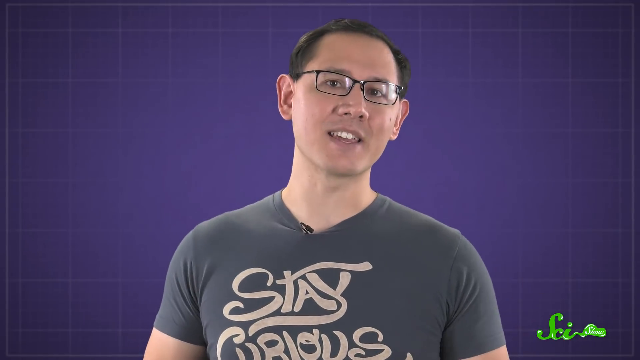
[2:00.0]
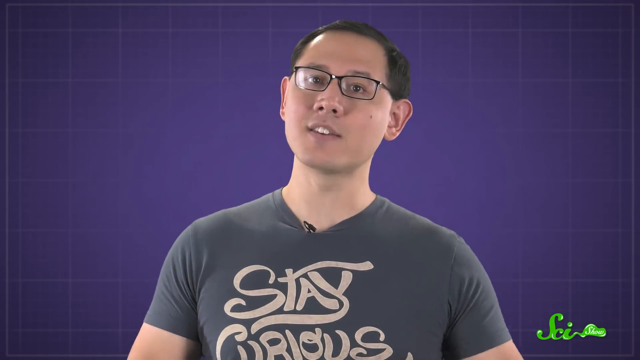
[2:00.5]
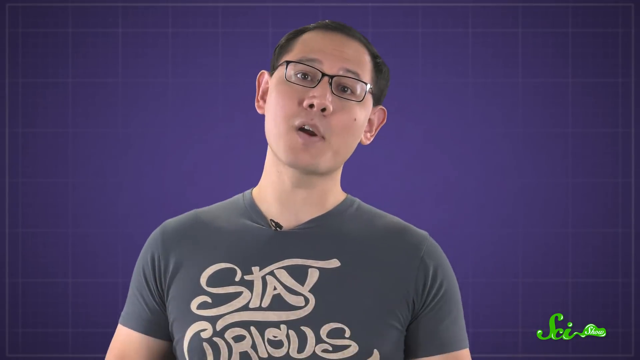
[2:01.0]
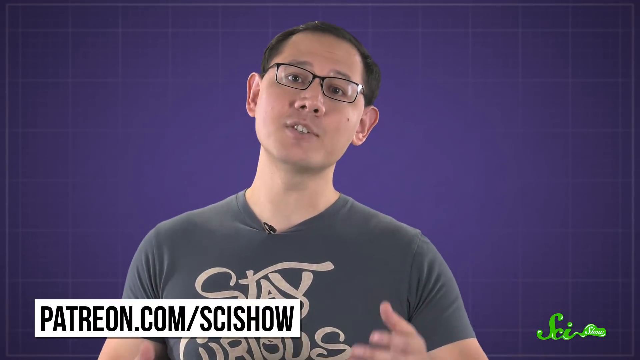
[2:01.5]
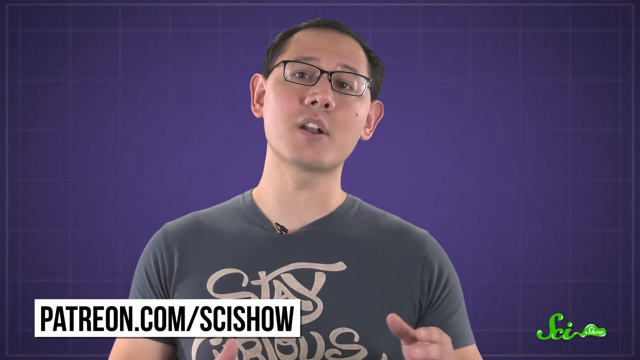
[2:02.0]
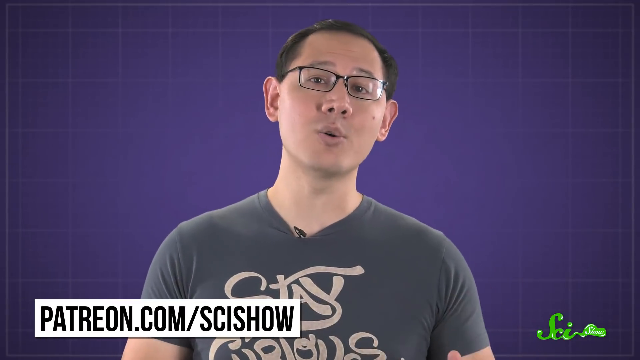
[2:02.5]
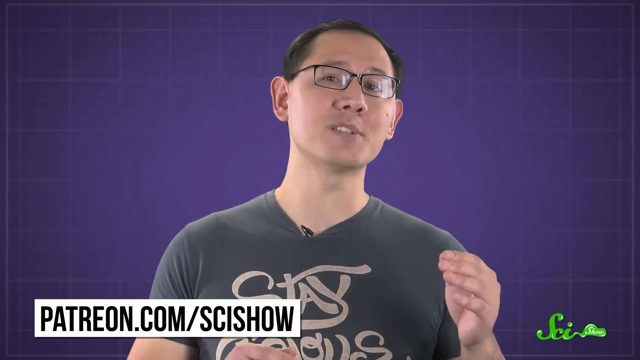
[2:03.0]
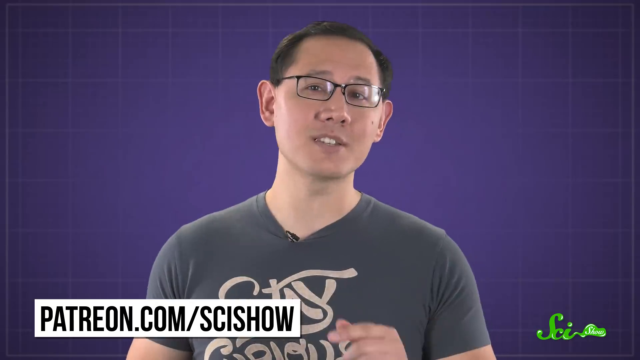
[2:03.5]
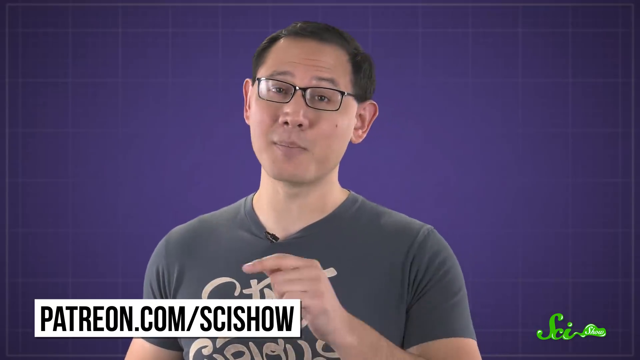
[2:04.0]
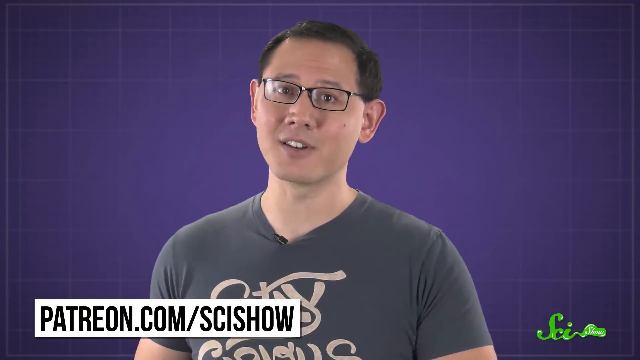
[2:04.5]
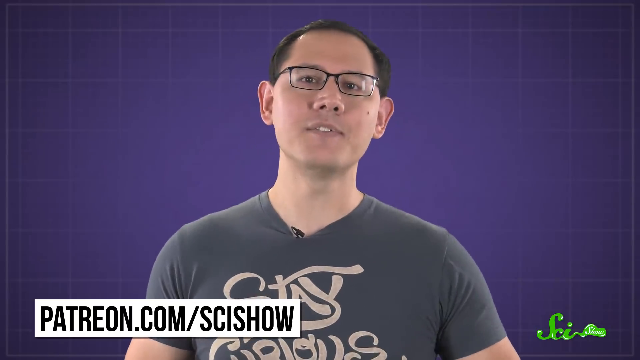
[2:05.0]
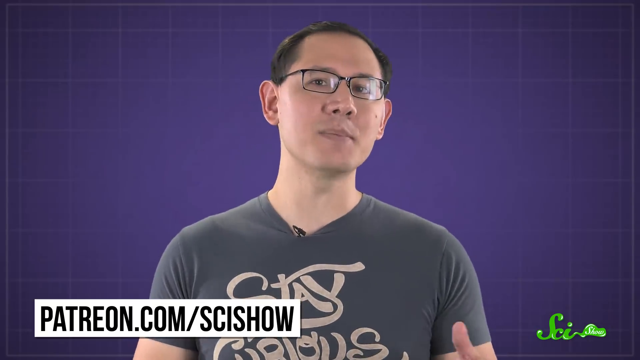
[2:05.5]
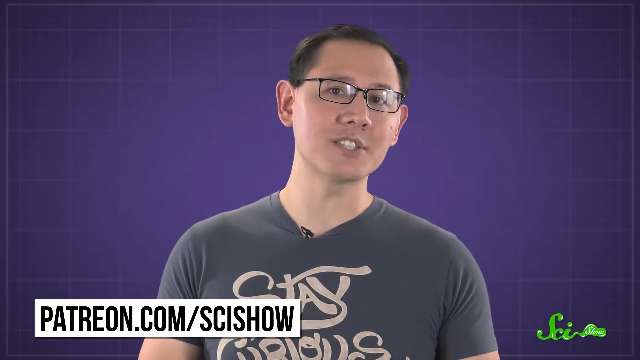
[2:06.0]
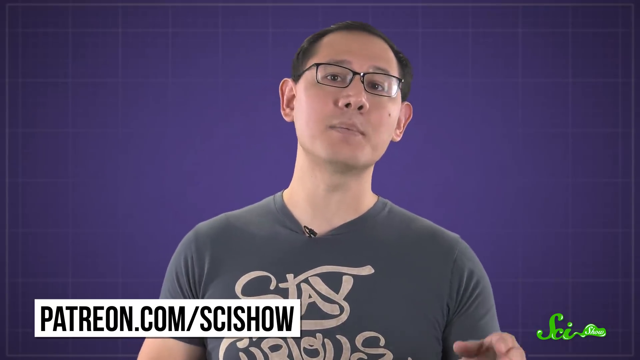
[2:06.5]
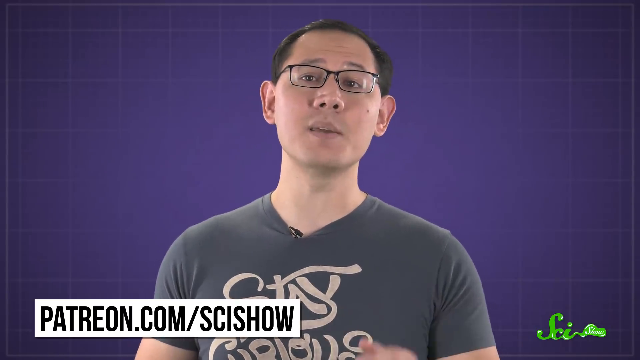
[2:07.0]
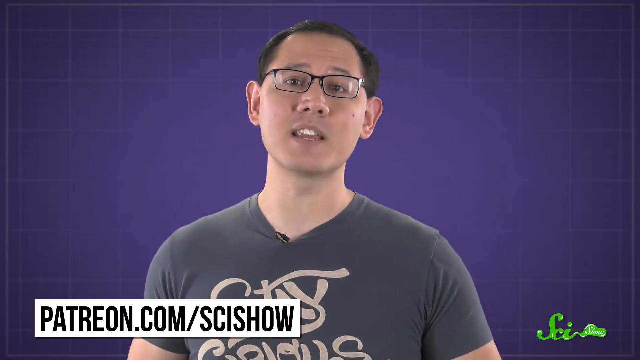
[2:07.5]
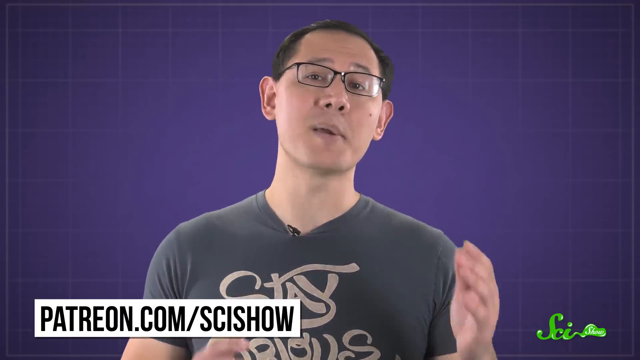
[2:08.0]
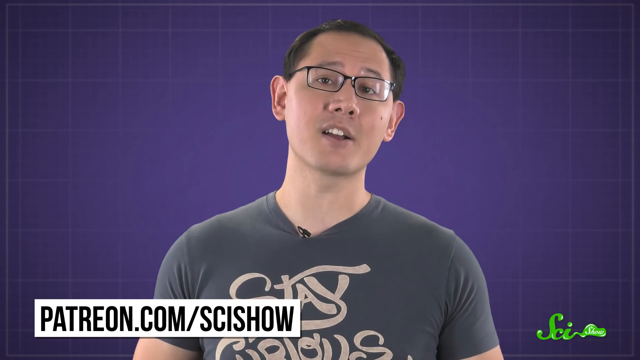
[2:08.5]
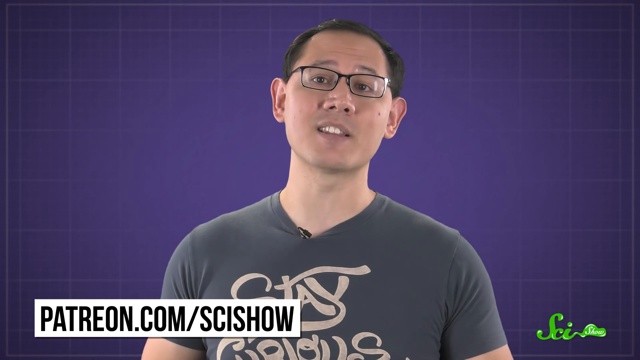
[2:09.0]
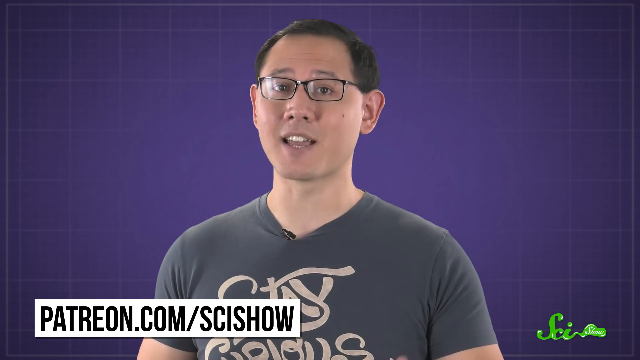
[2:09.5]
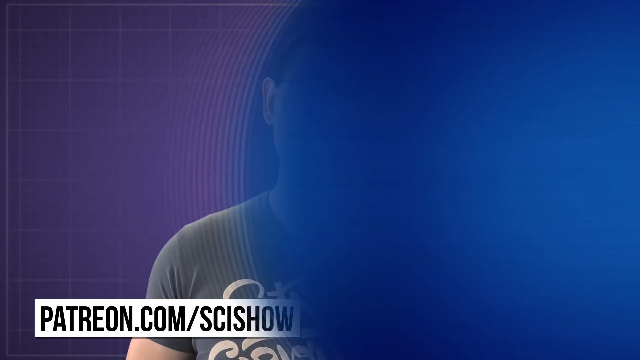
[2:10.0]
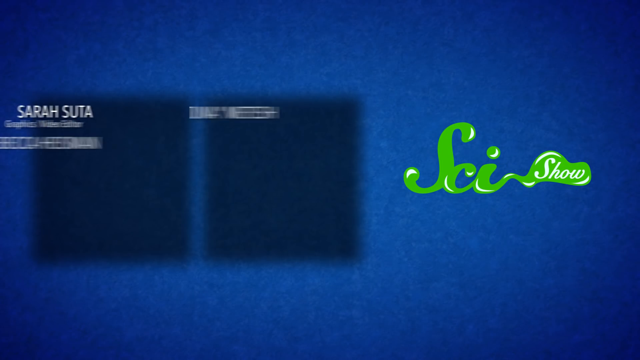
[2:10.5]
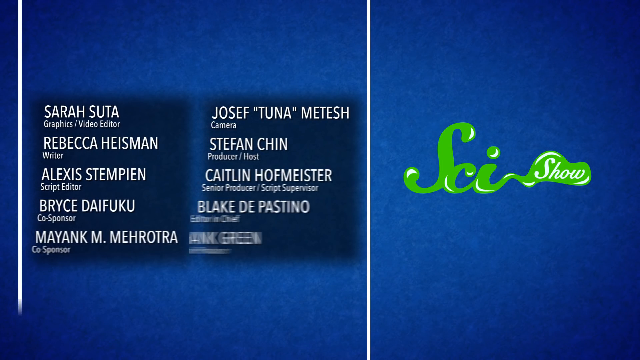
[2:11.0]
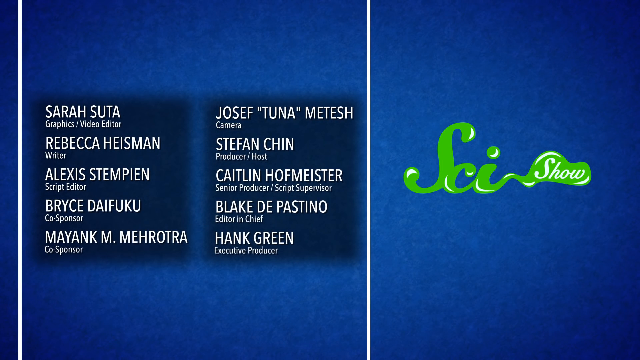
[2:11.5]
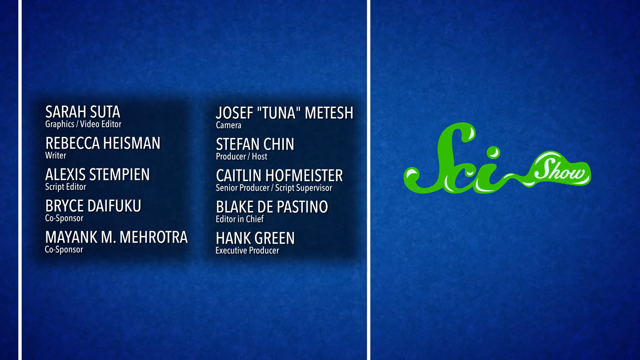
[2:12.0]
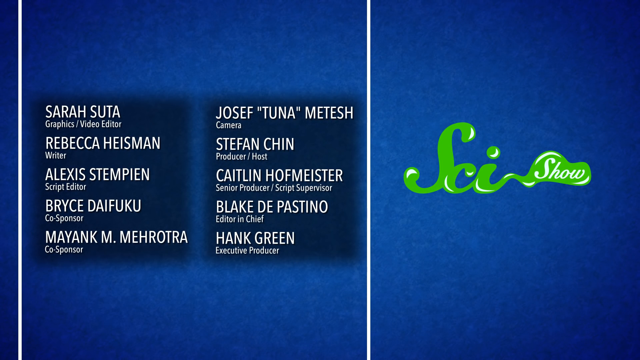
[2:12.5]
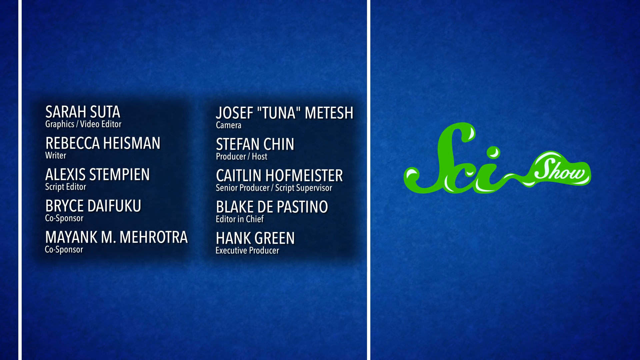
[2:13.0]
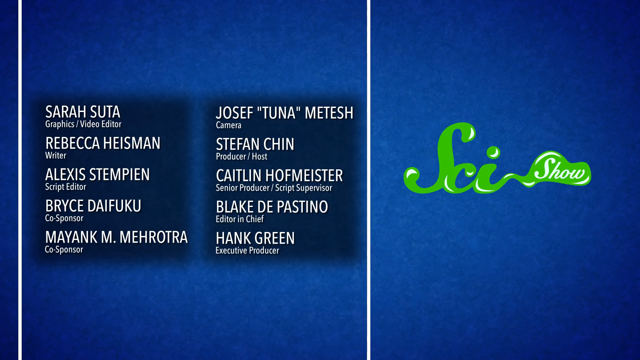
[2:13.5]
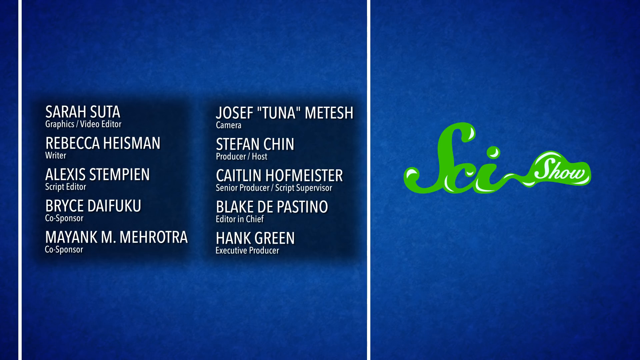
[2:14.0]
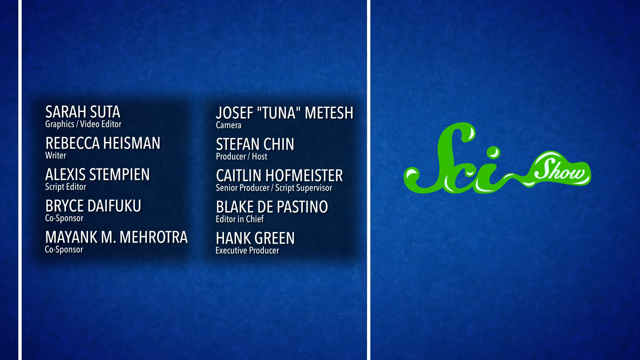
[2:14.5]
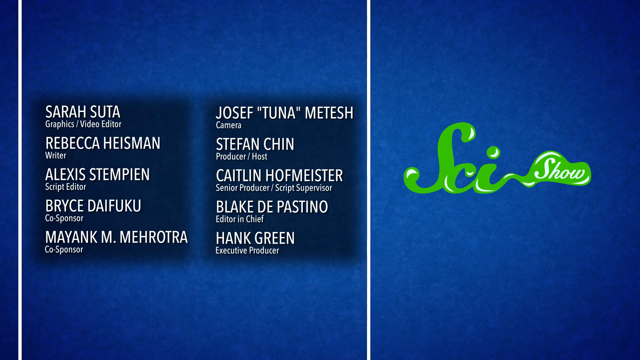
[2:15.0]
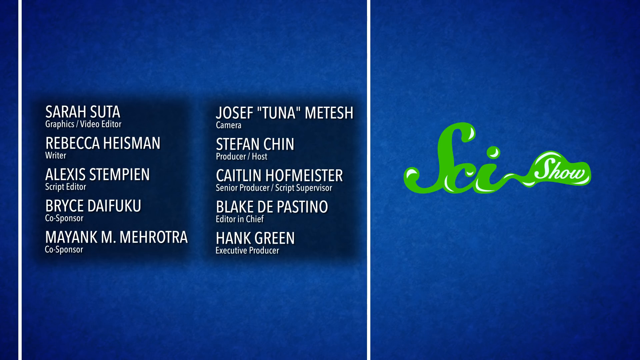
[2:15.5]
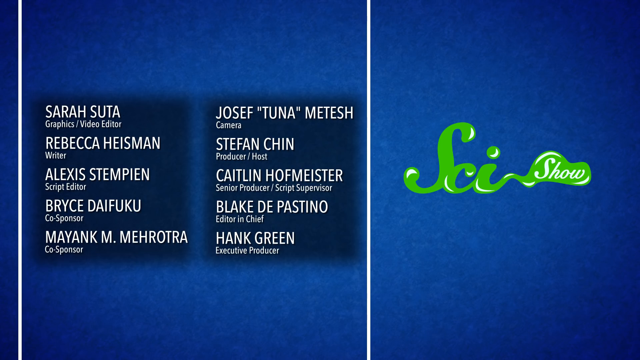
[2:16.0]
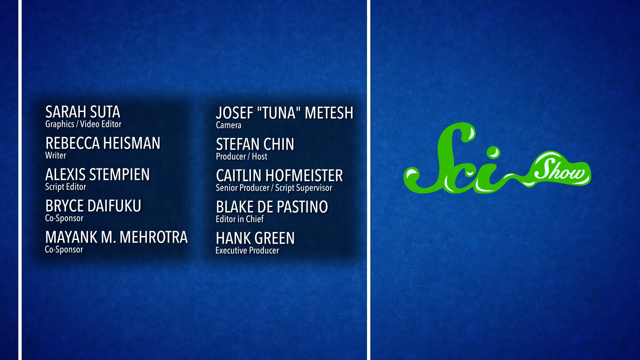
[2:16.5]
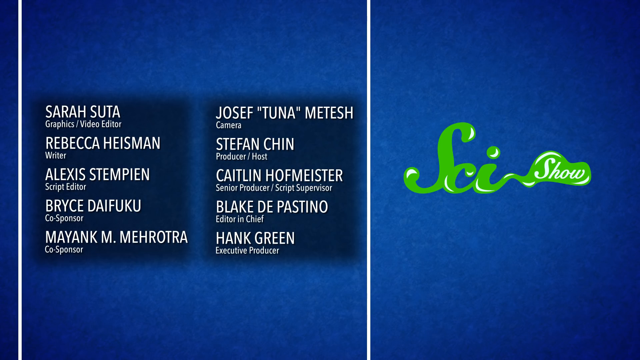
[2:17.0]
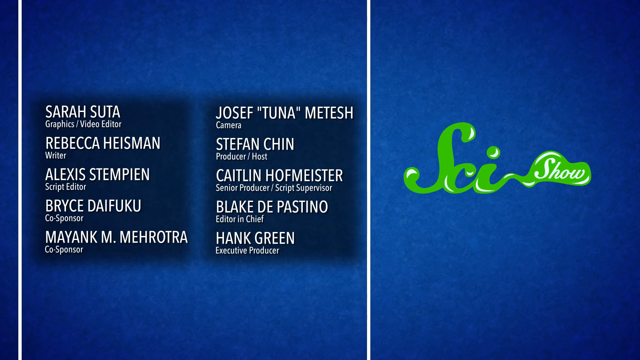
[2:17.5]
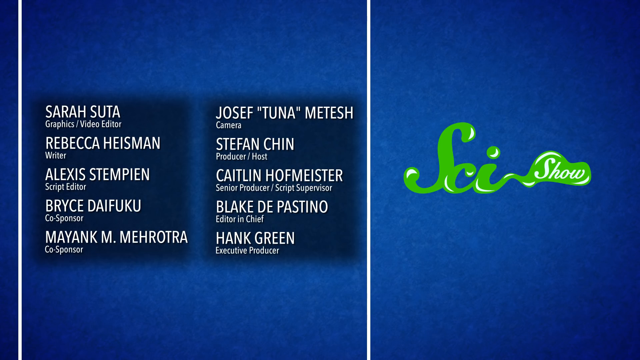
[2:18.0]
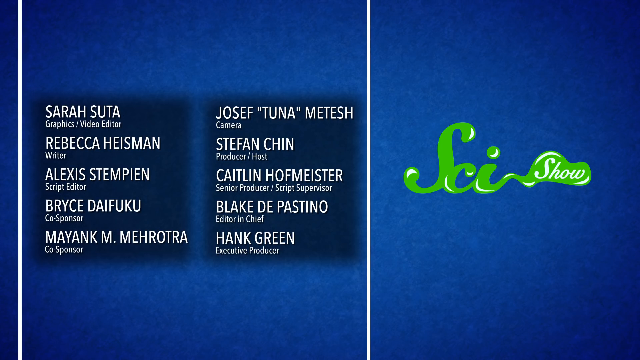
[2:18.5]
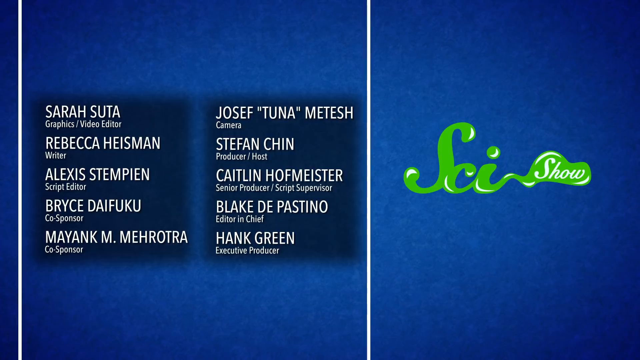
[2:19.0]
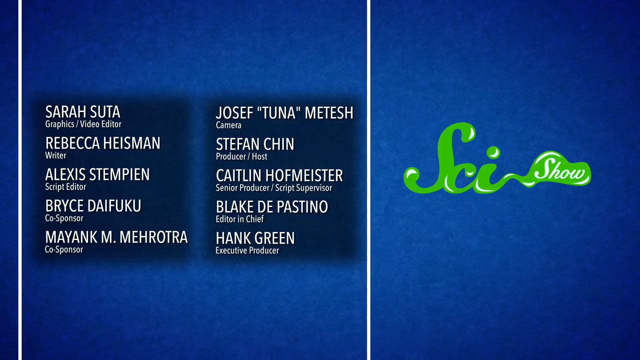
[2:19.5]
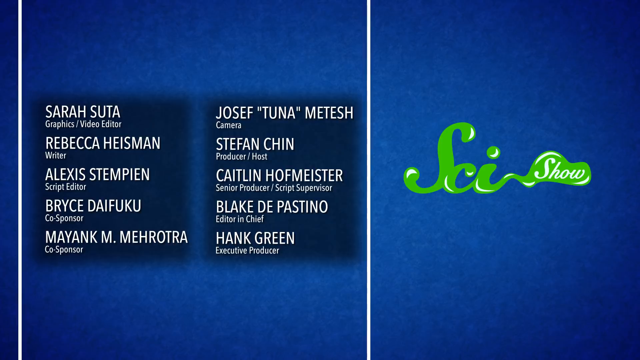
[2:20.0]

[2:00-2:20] A man in a dark gray shirt with the word "STAY" on it talks to the camera against a purple background. A small black microphone is clipped to his collar, and he has short black hair and black glasses. The URL "patreon.com/scishow" comes onto the screen in black letters on a white background. Then a blue screen shows several names on the left side with titles such as "graphics / video editor," "script editor," "co-sponsor," "camera producer / host," "senior producer / script supervisor," "editor-in-chief" and "executive producer." On the right side is the SciShow globe in green with a couple of white letters.